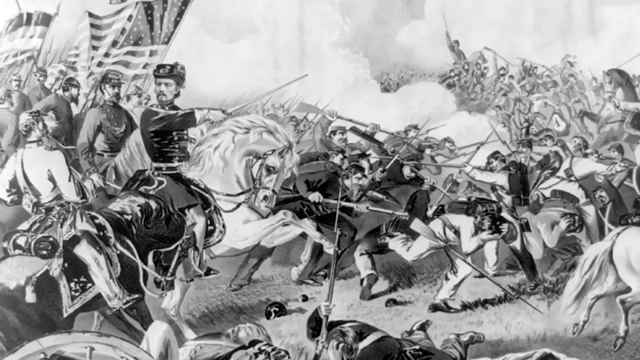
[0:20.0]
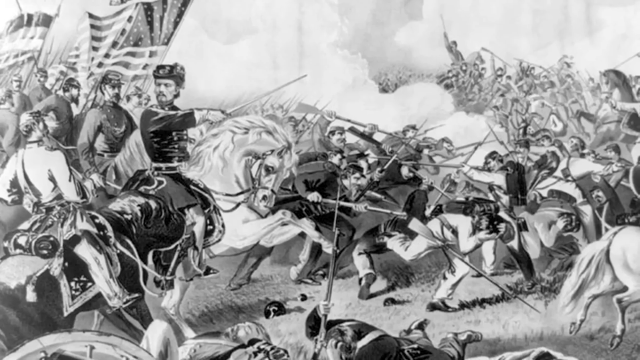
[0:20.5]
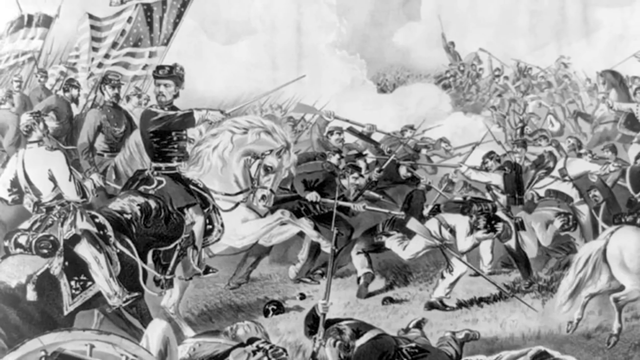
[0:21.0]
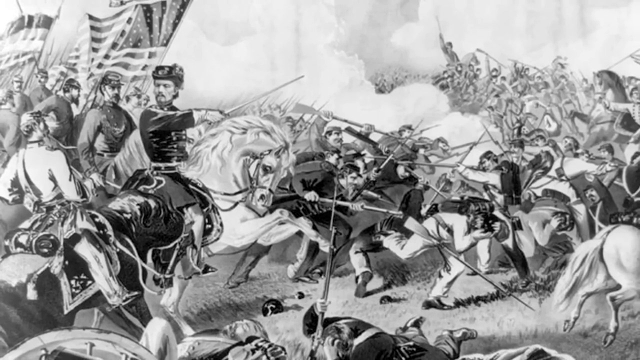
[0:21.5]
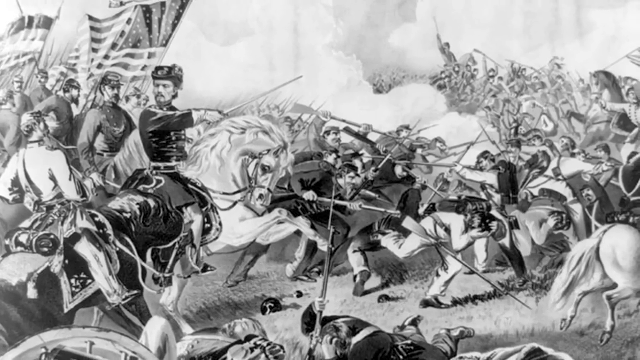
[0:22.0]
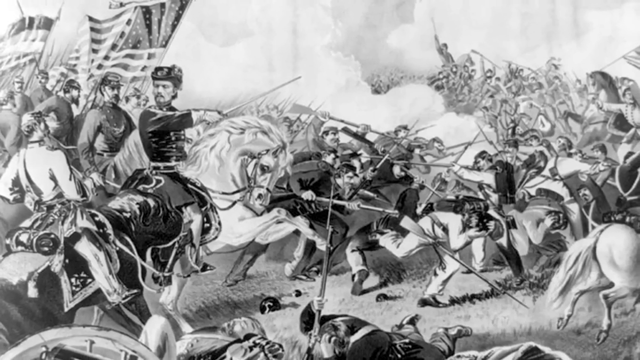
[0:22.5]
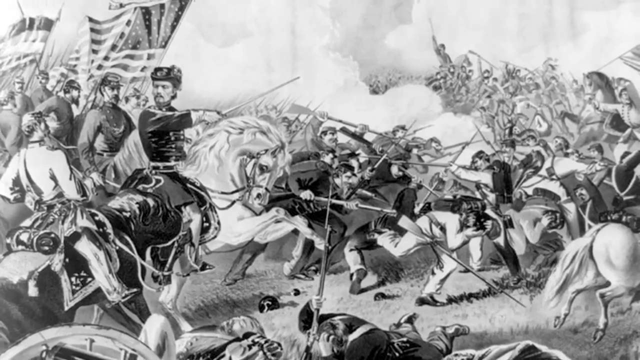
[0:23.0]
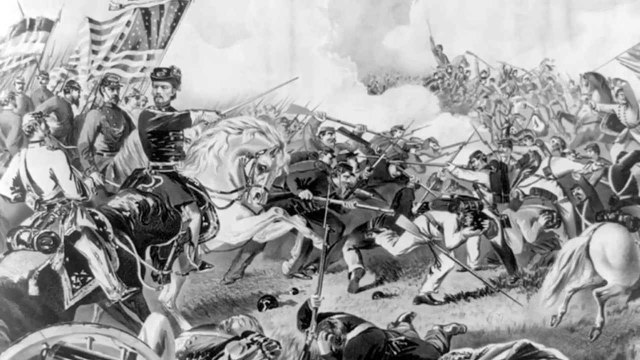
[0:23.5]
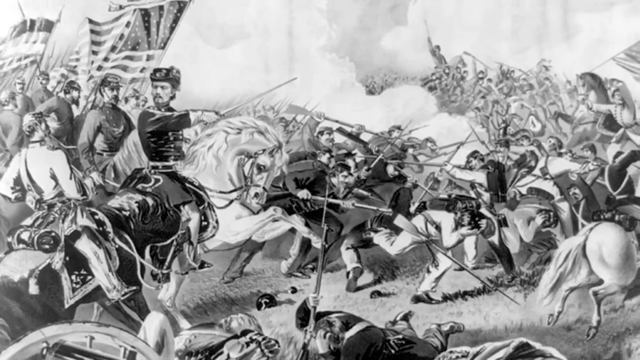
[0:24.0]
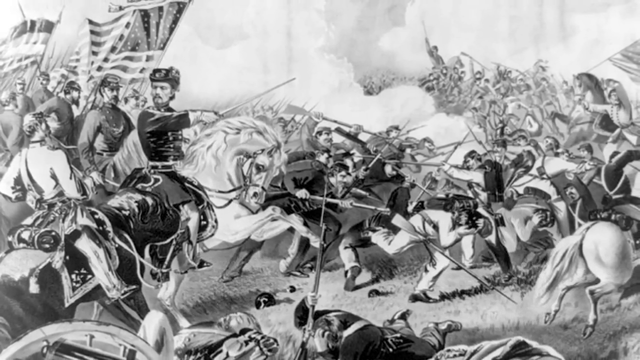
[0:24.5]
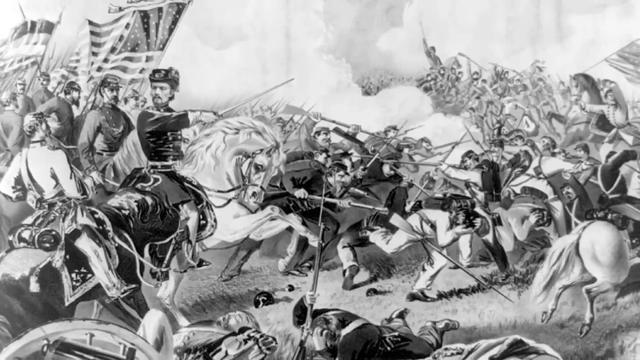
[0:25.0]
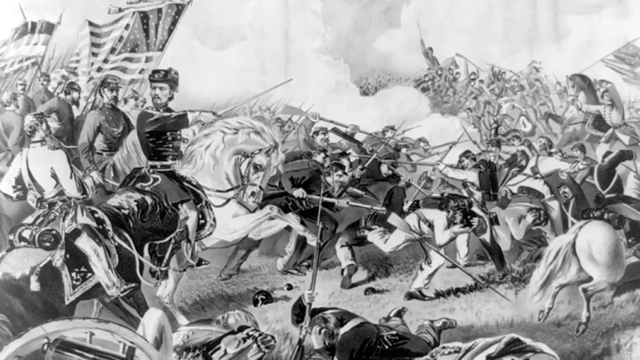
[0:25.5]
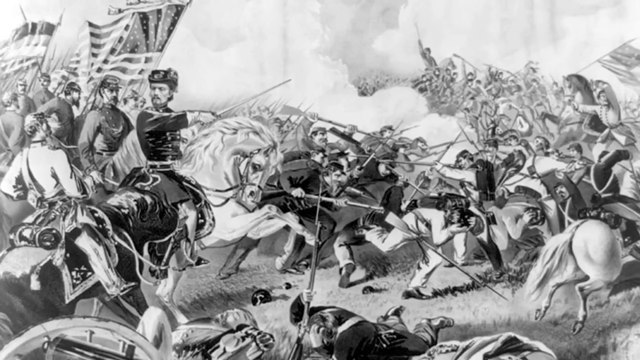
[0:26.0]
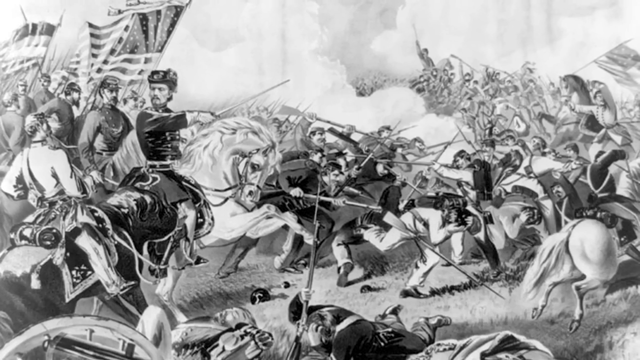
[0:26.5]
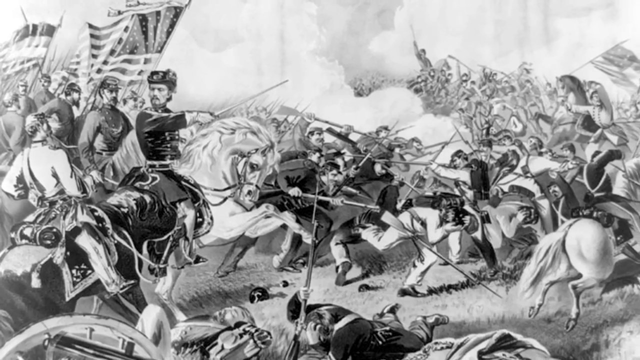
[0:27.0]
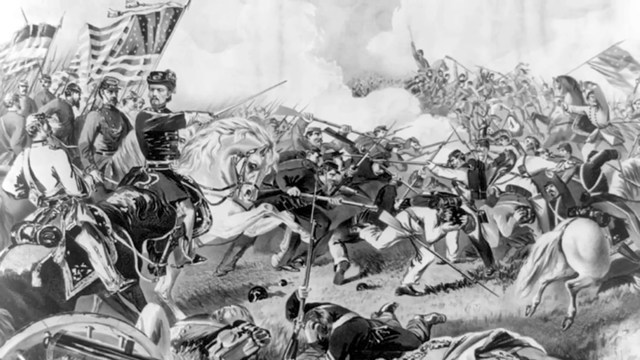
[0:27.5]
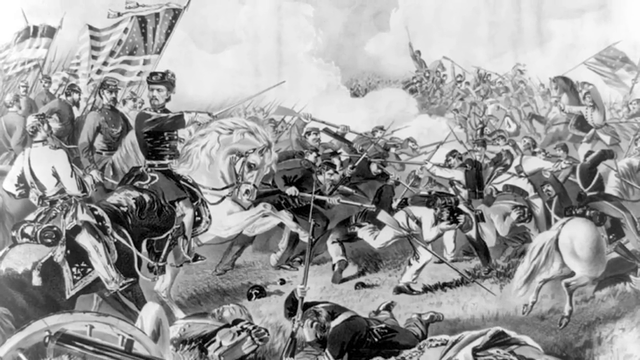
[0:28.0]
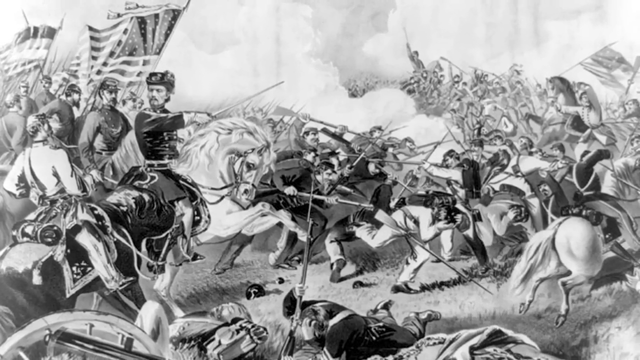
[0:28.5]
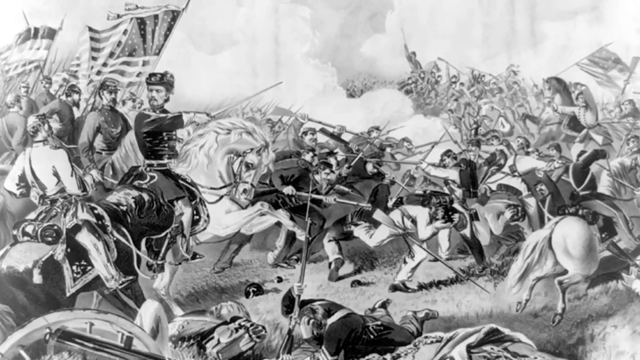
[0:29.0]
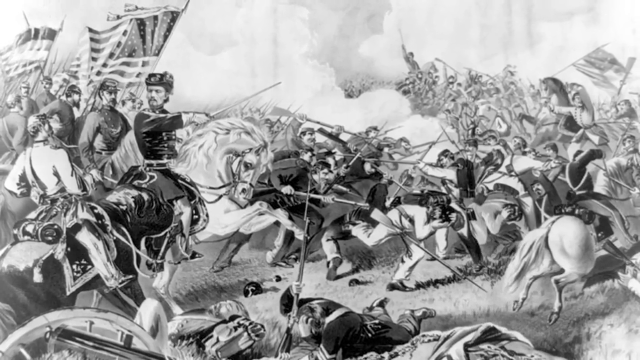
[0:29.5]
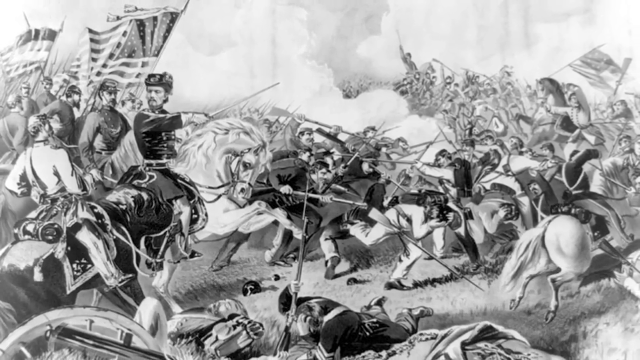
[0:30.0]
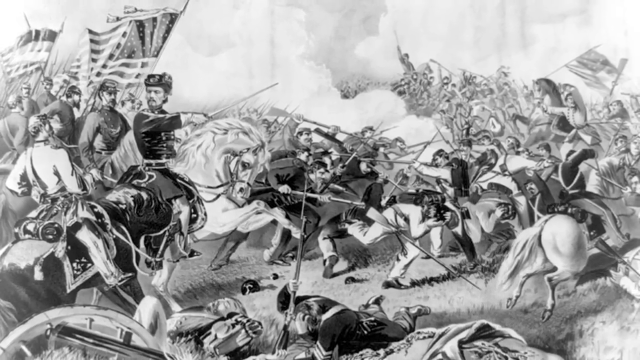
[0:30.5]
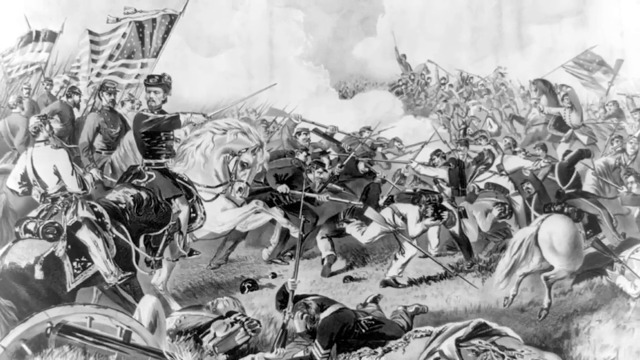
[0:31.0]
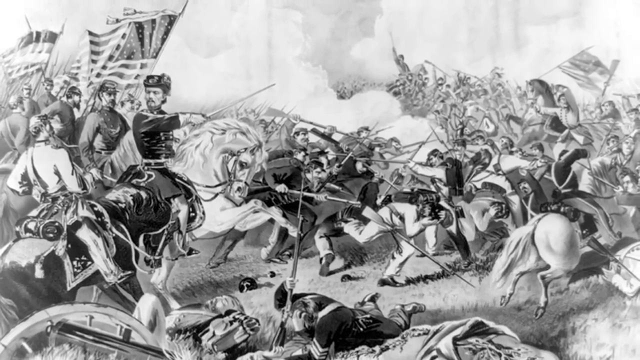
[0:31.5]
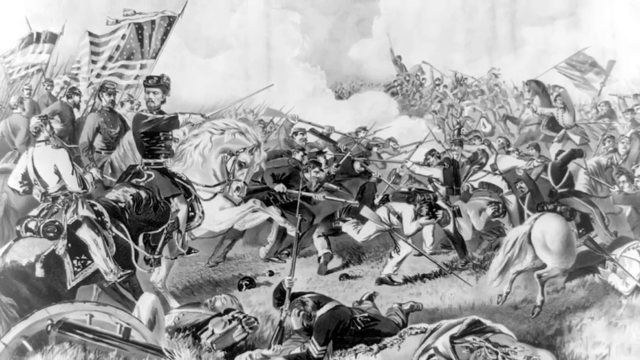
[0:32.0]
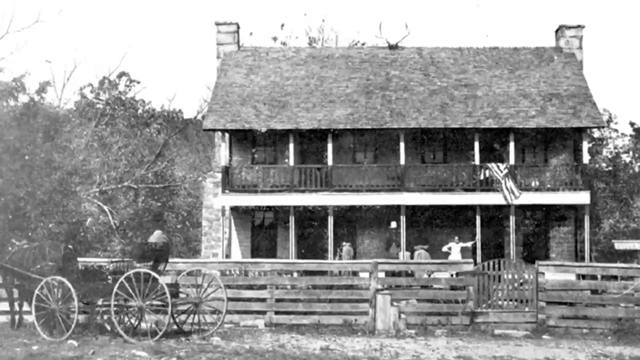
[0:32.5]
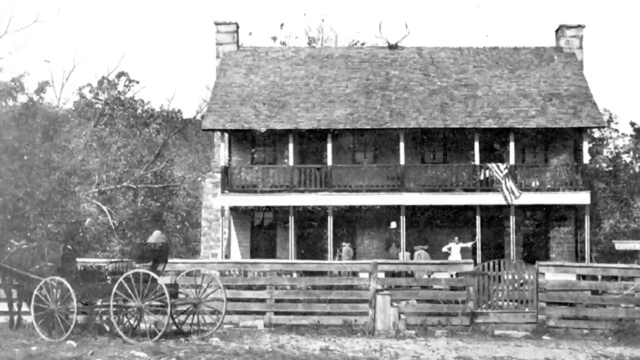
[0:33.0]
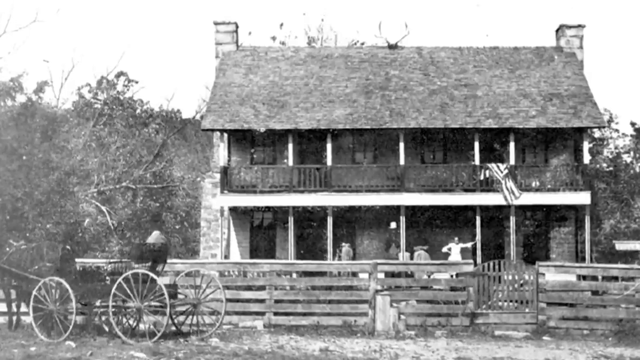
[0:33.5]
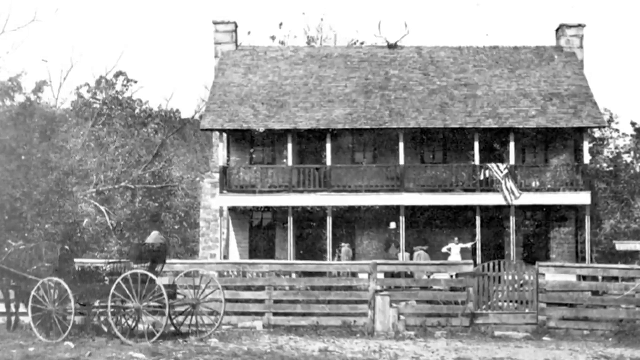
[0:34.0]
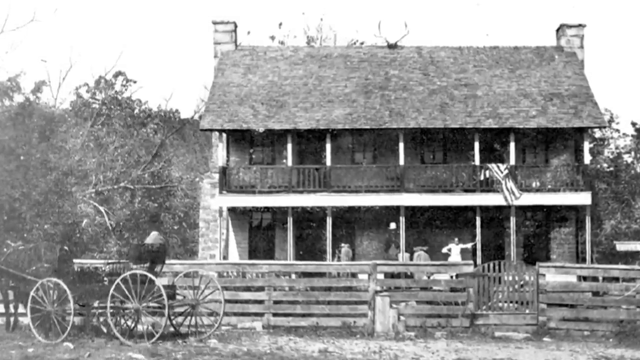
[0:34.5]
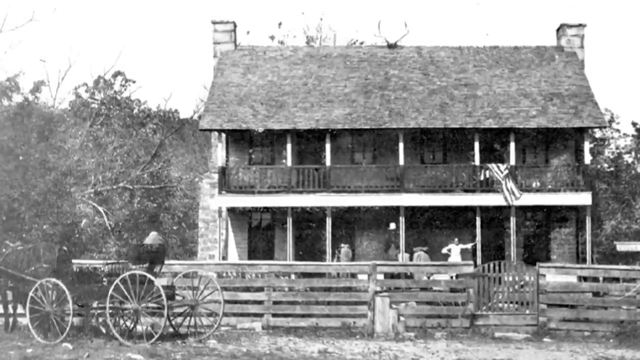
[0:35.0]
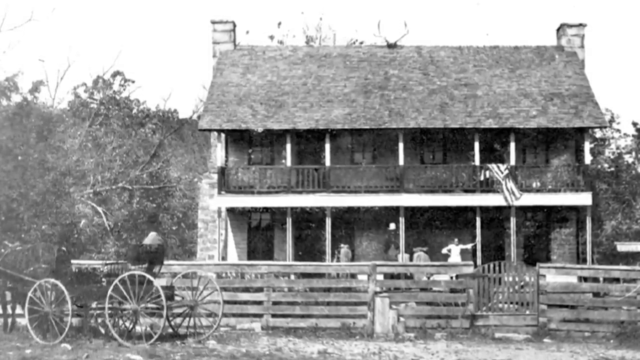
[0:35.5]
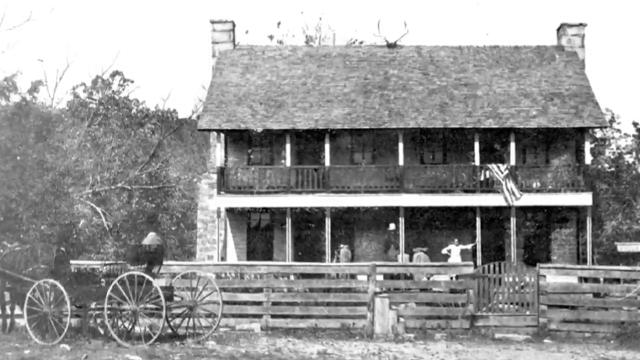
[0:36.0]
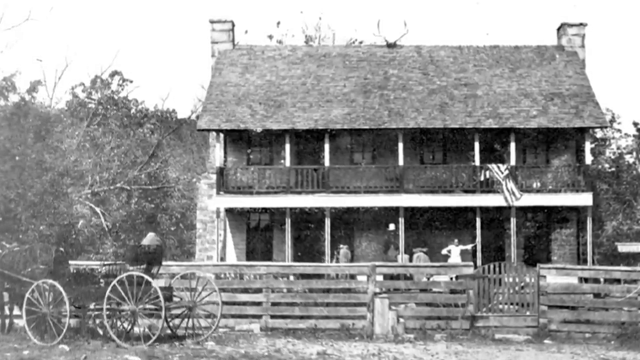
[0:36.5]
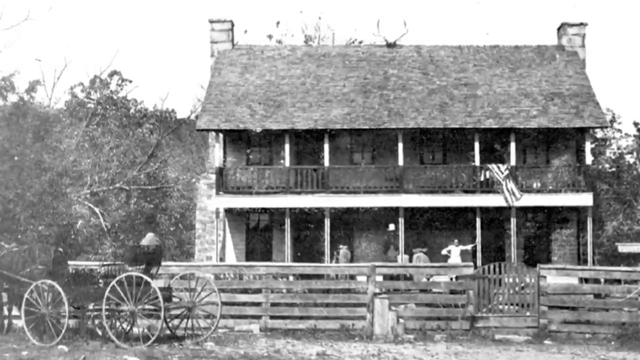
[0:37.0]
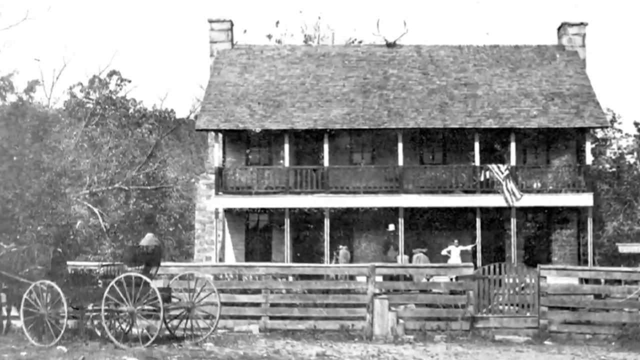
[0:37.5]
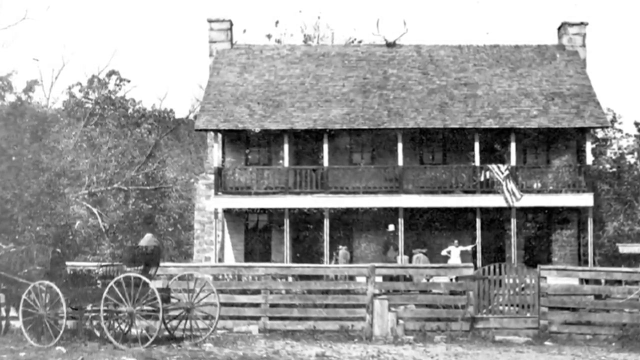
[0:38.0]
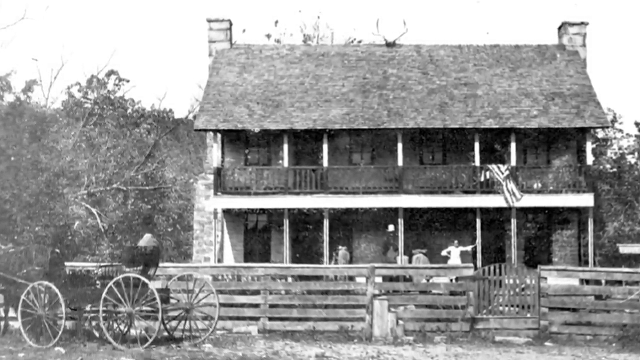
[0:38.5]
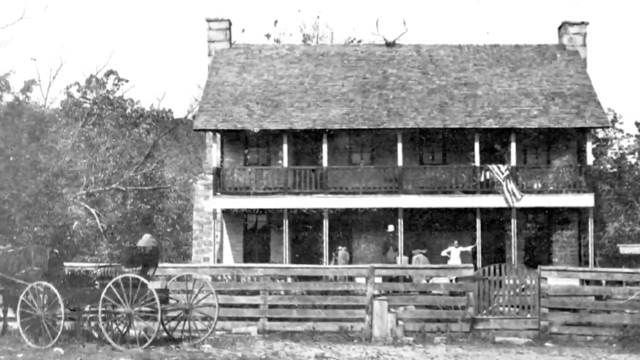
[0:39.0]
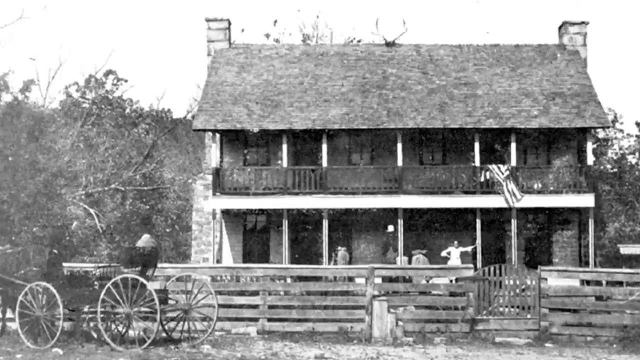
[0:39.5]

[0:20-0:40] A black-and-white photo shows a vast field or mass of land. At the top is a white sky, beneath it a series of hills or mountains on the horizon, and beneath that a large body of water surrounded by trees to the left and right. Below is a vast field or plain dotted by a few trees. A house and a farm are visible in the lower left corner, and white text is in the lower right portion. The video then shows a black-and-white illustration of a battle. On the left, several soldiers face right with American flags hung behind them. The main general holds his sword in his right hand, pointing to the right, and turns back over his right shoulder to look to his left. In the middle, soldiers charge, stabbing and attacking soldiers on the right who are moving left. The view slowly zooms out, and a Confederate battle flag flies on the right side. Next comes a photo of a two-story house with a wooden fence in front of it and a wagon on the left in front of the fence. Trees are in the background on both sides of the house. On the right side of the second floor, a flag is draped over the balcony. On the first floor, a woman stands facing the camera, her left hand up, leaning against a wooden post, and her right hand on her hip or waist. The video zooms in slowly.